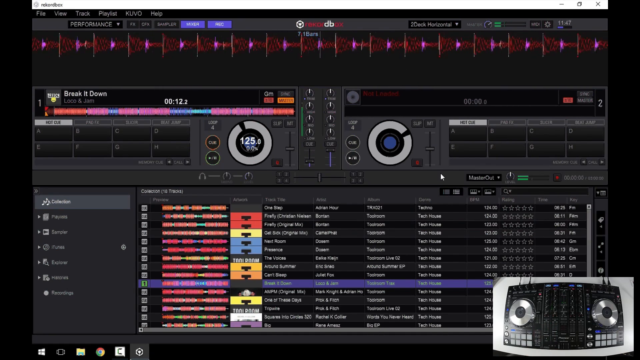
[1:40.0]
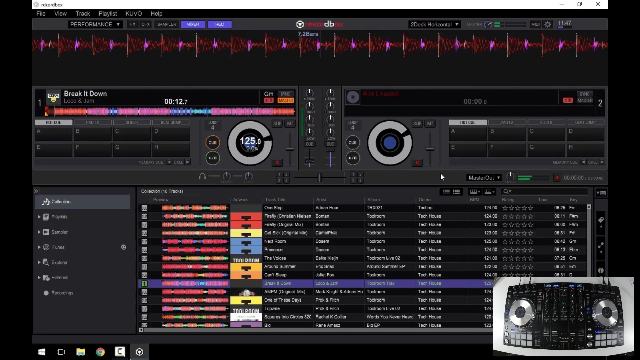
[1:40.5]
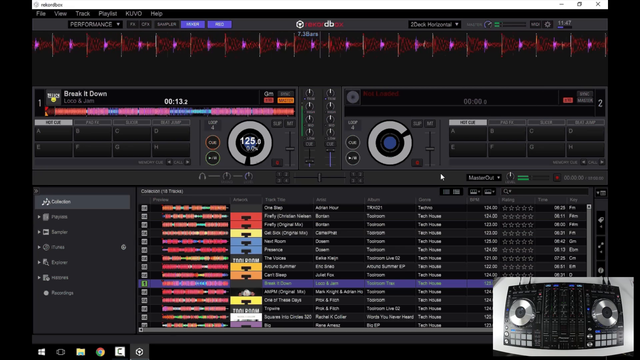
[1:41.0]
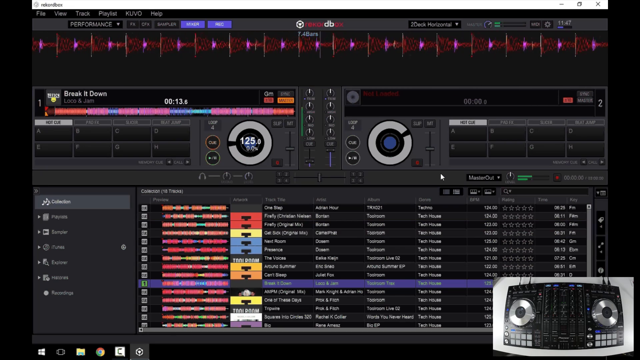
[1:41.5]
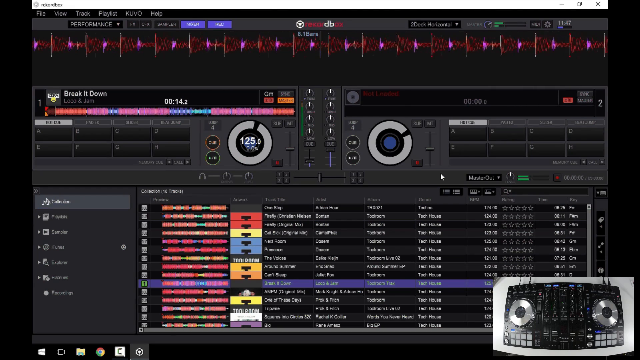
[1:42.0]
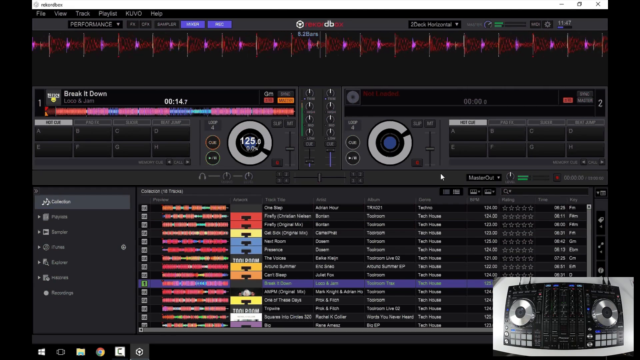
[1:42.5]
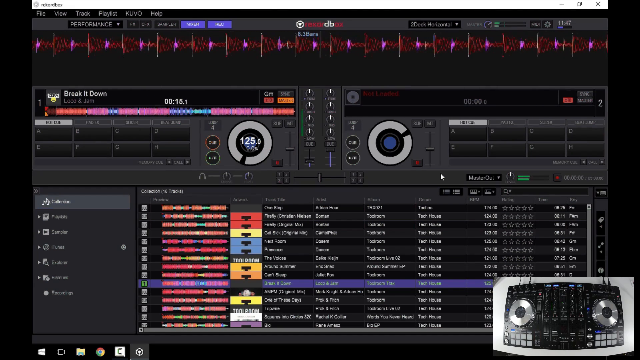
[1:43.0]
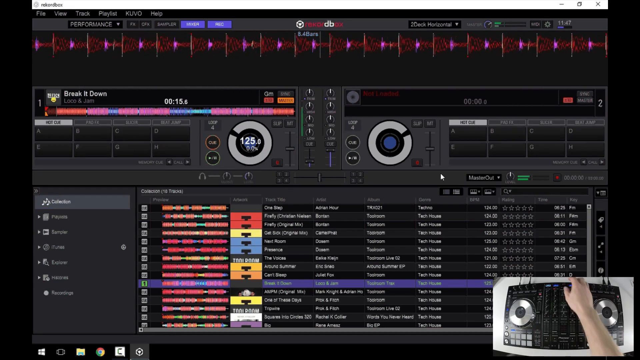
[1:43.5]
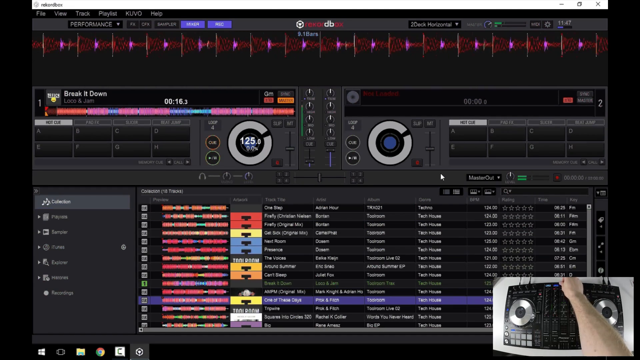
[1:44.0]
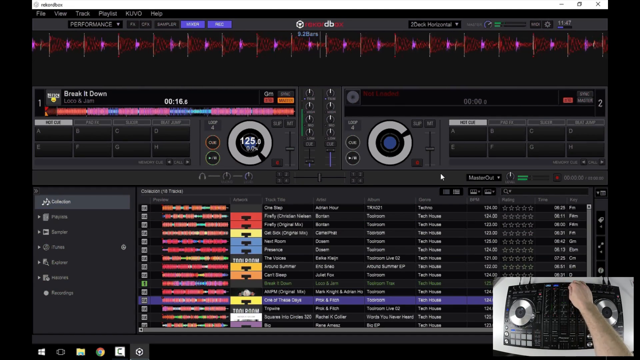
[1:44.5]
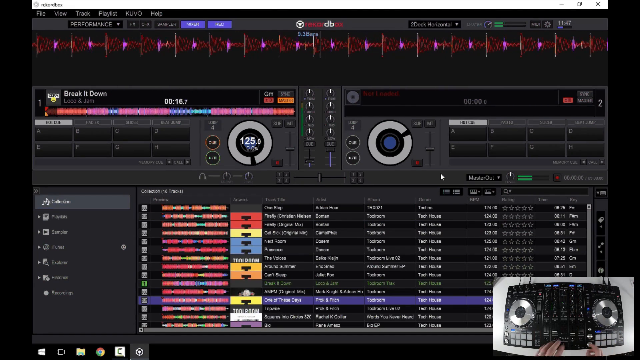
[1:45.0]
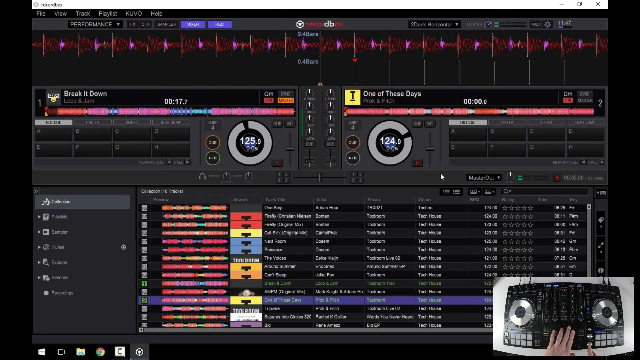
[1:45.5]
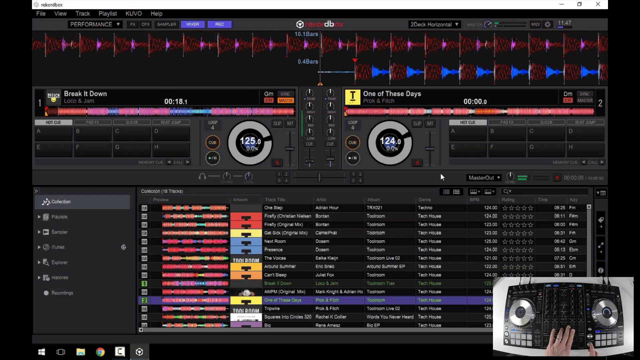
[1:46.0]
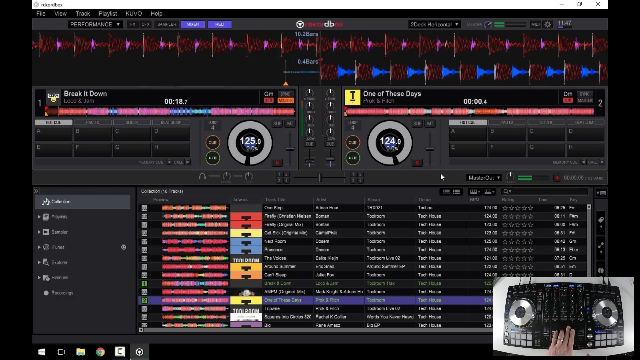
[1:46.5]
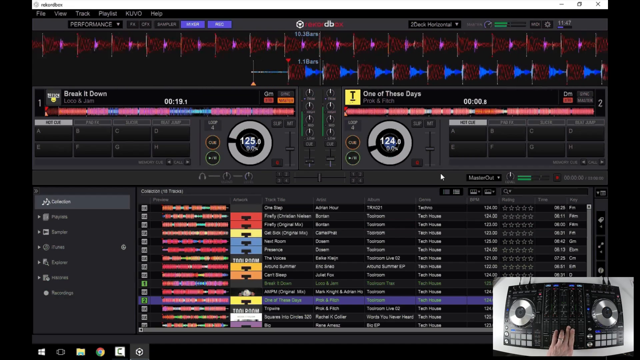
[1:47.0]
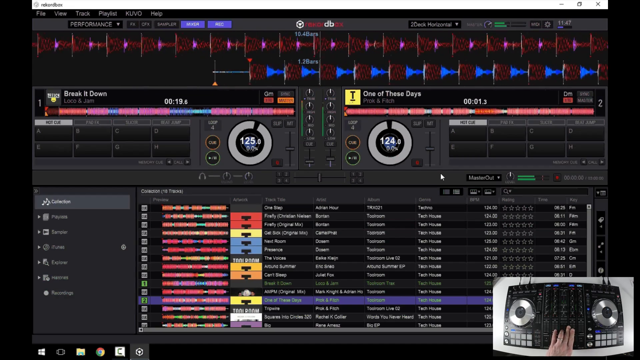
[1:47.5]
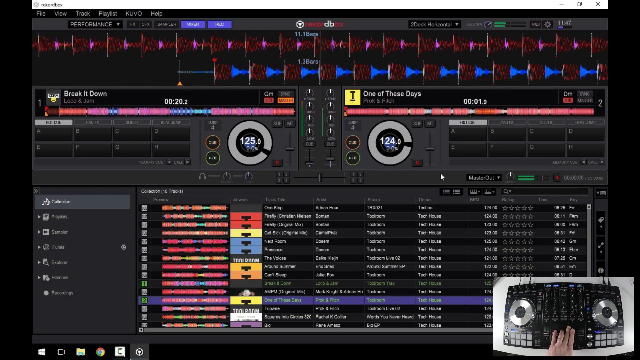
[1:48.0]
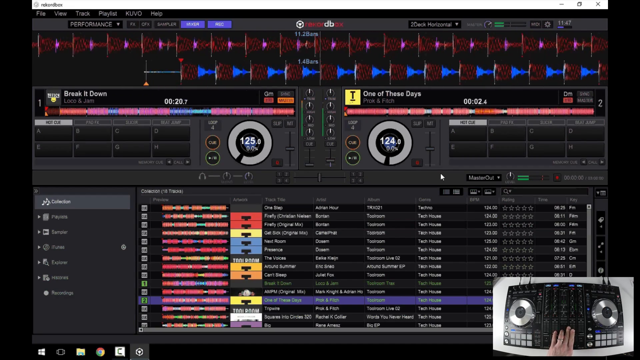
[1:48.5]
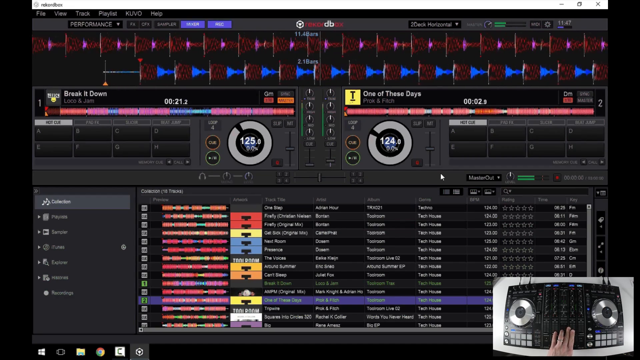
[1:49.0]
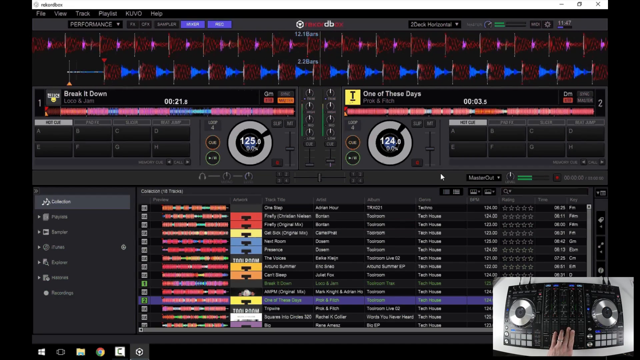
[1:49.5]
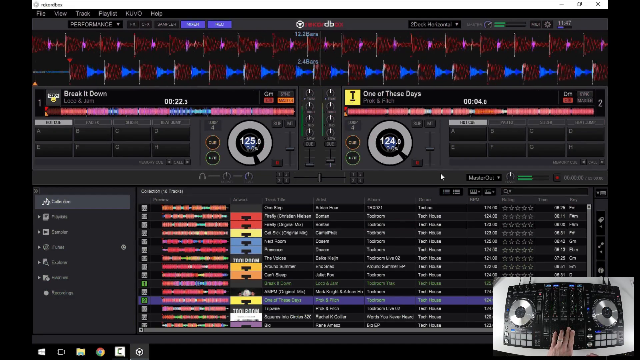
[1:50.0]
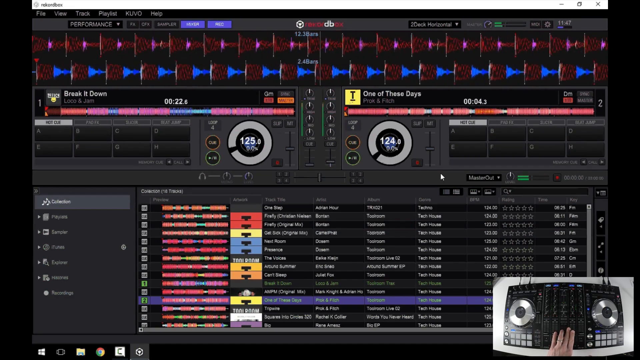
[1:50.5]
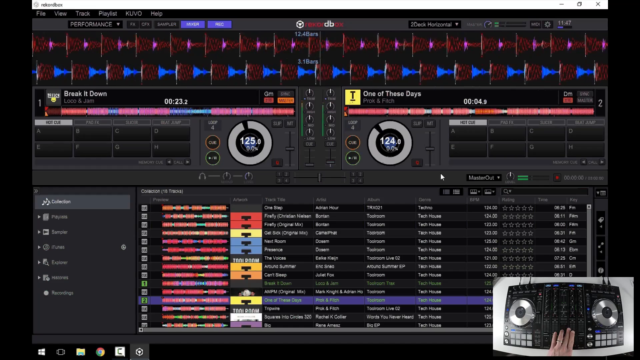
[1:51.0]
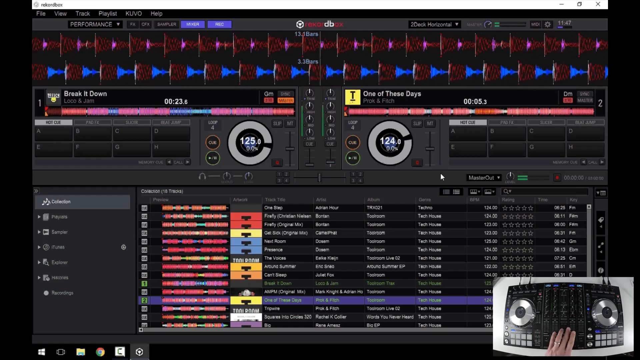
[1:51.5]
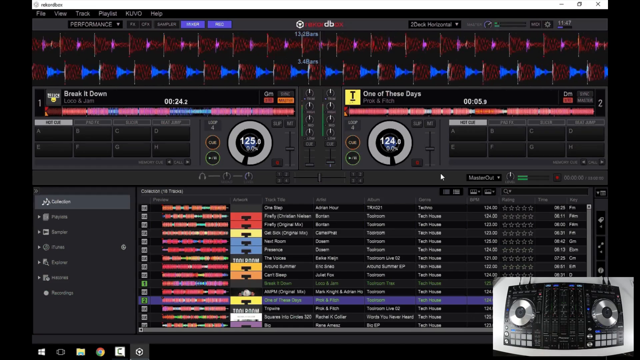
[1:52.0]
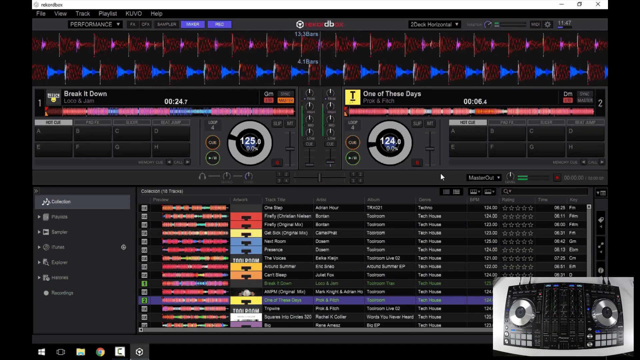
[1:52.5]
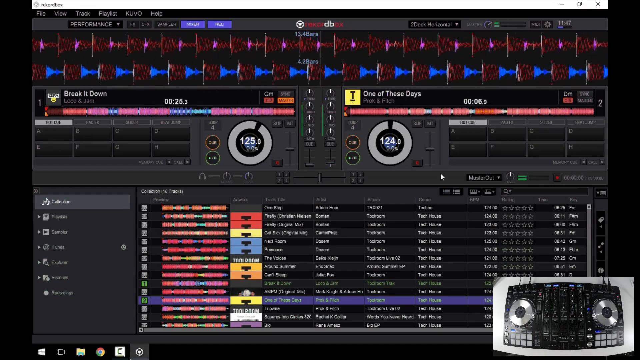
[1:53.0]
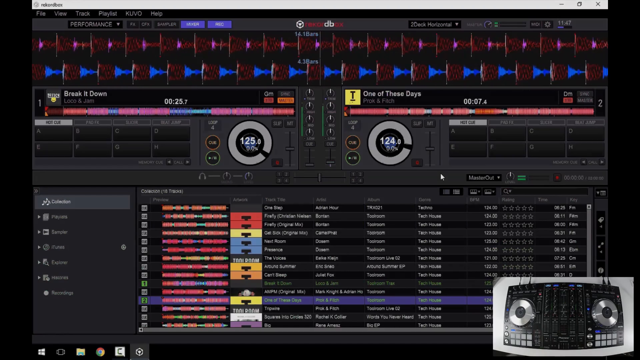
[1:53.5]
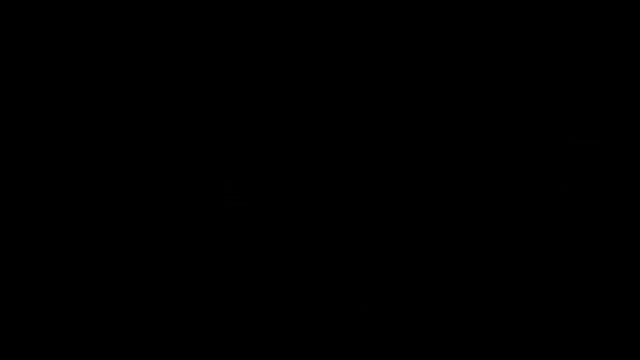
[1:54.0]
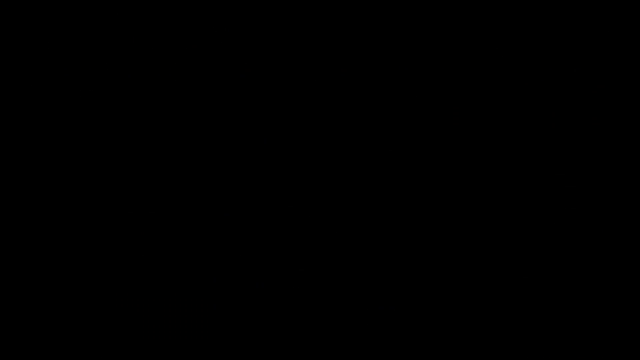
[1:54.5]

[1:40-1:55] The dashboard is on screen, with the real-time pop-out video of the Pioneer DJ mixer in the bottom right-hand corner. The visuals still indicate that something is playing. The user adjusts track three, pulling its volume down slightly, and a second track of visuals starts to appear on the screen. At the top of the main dashboard is a space with a track for each track on the mixing desk; the first one is playing along, and an adjustment on track two is visually represented on the dashboard.